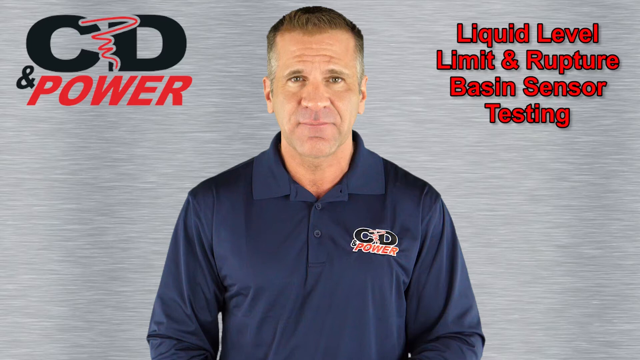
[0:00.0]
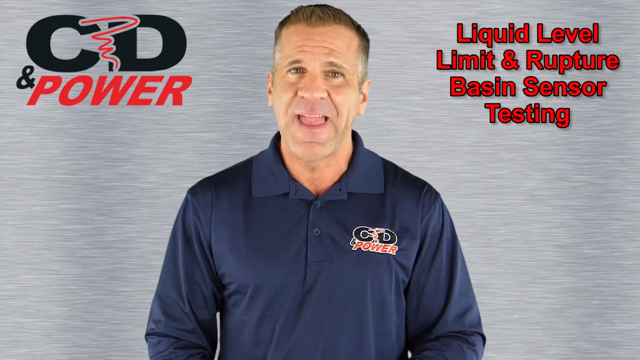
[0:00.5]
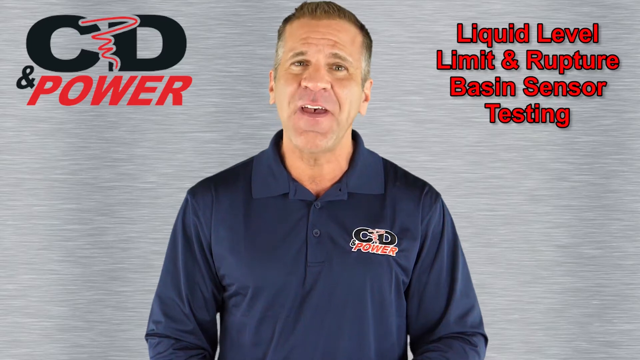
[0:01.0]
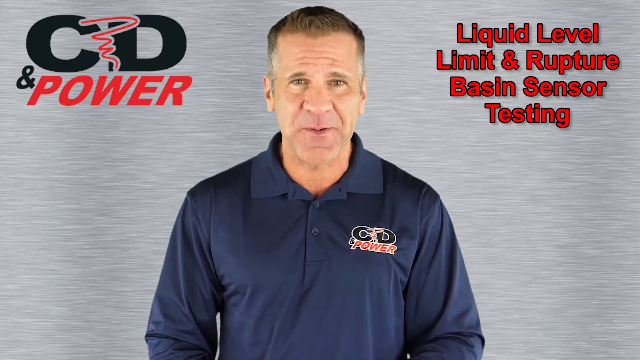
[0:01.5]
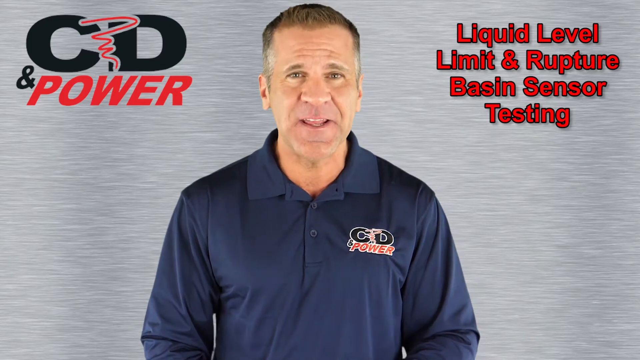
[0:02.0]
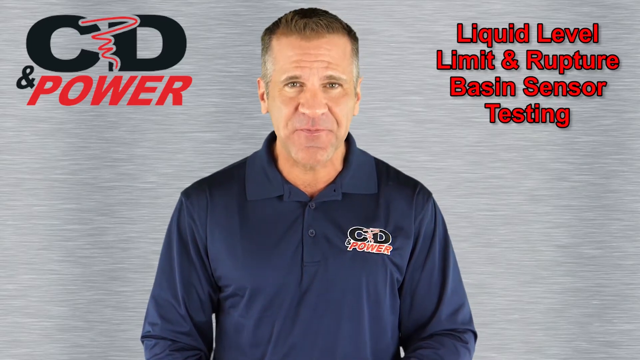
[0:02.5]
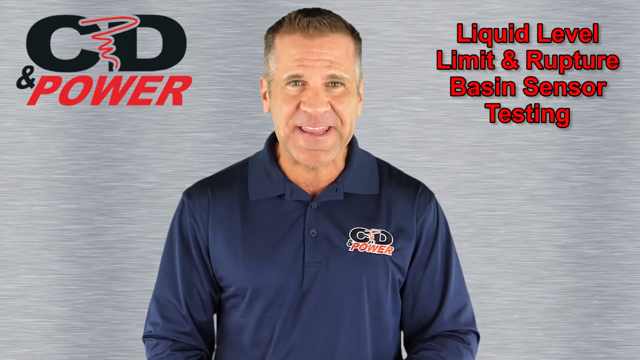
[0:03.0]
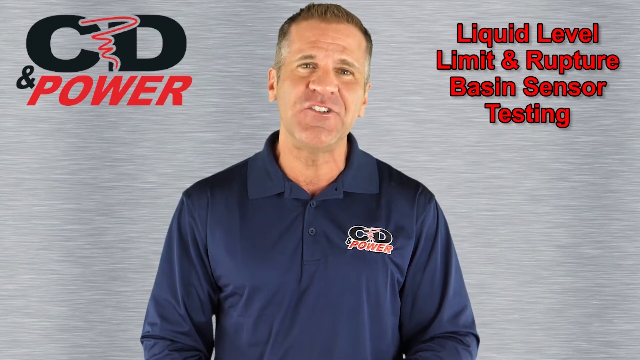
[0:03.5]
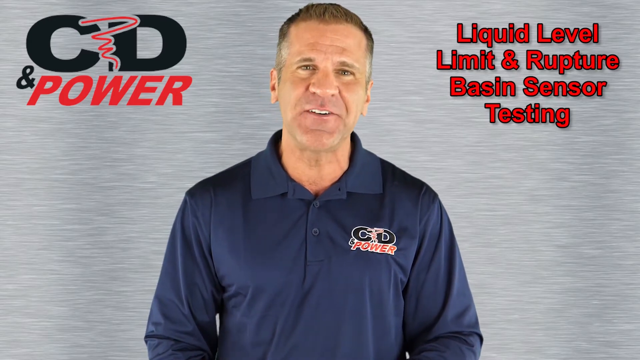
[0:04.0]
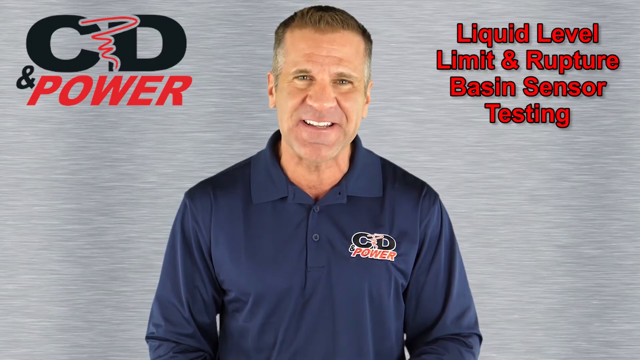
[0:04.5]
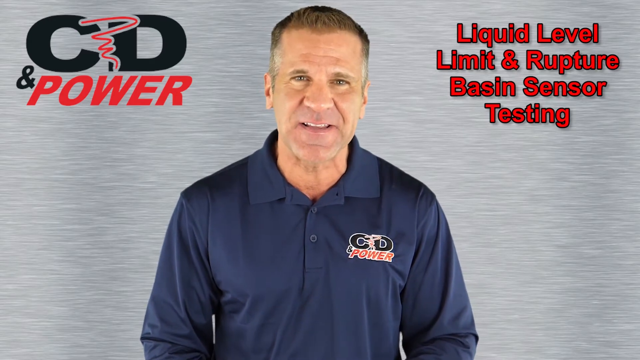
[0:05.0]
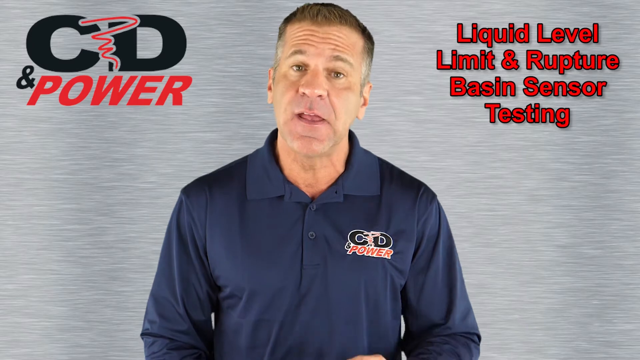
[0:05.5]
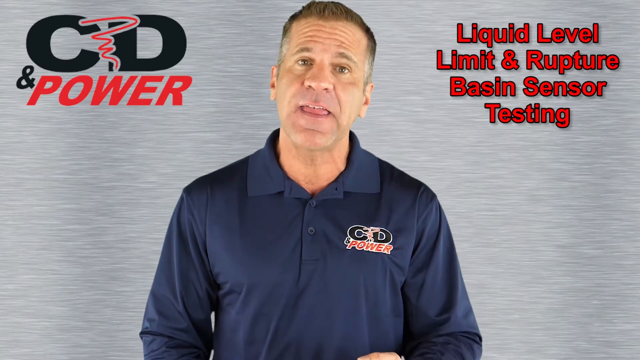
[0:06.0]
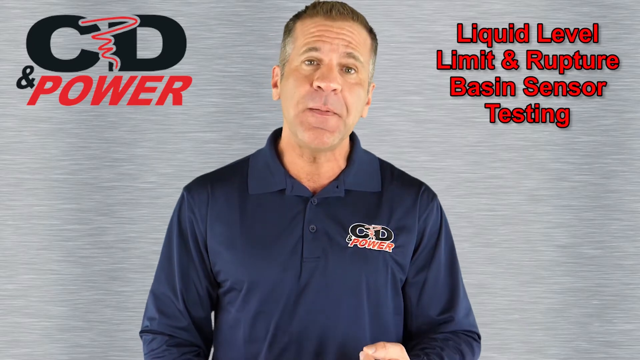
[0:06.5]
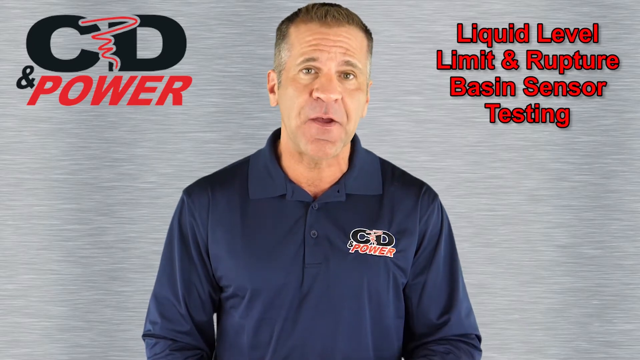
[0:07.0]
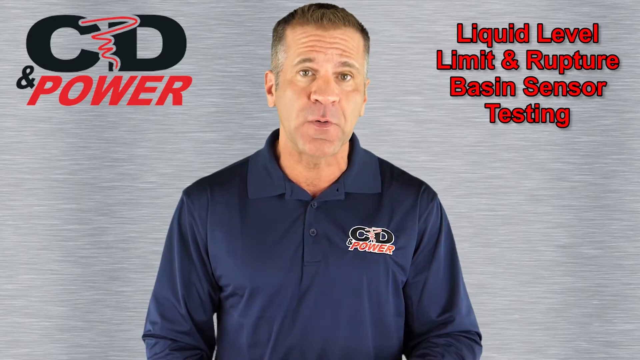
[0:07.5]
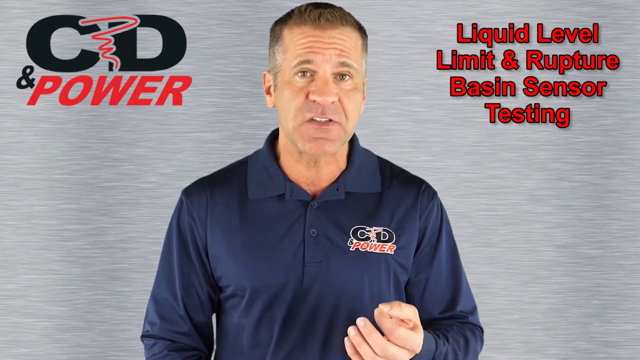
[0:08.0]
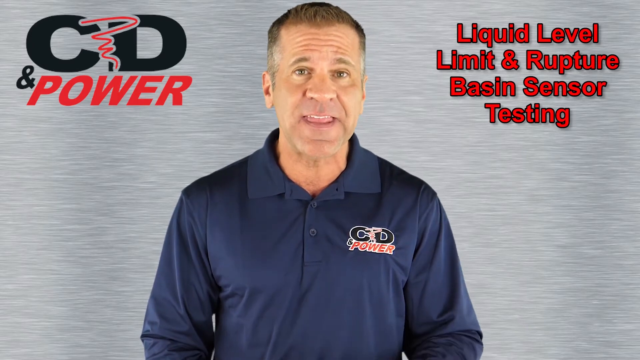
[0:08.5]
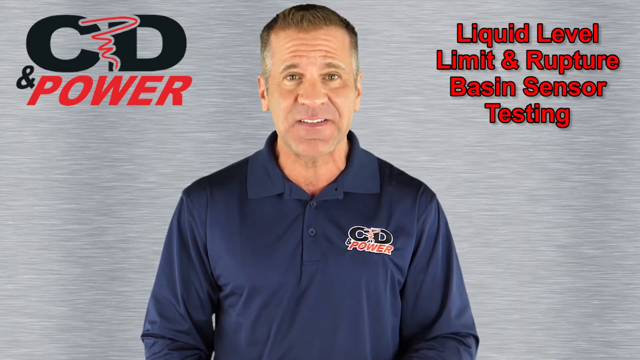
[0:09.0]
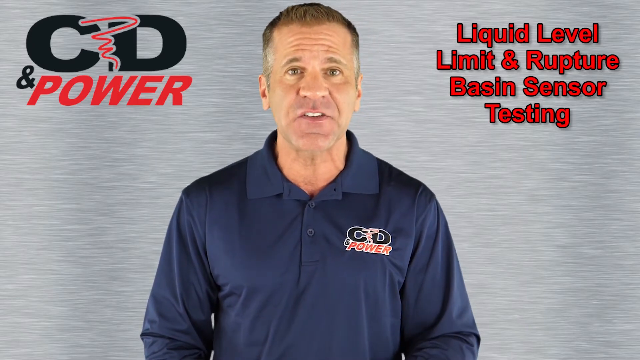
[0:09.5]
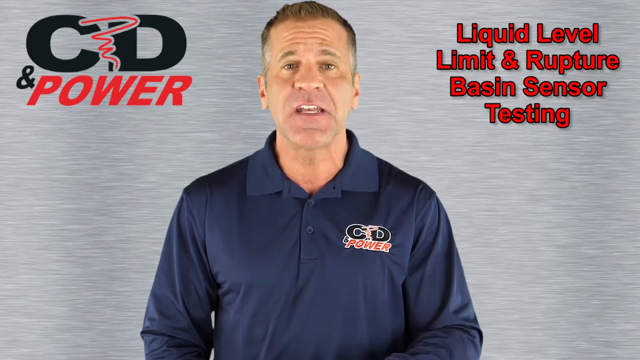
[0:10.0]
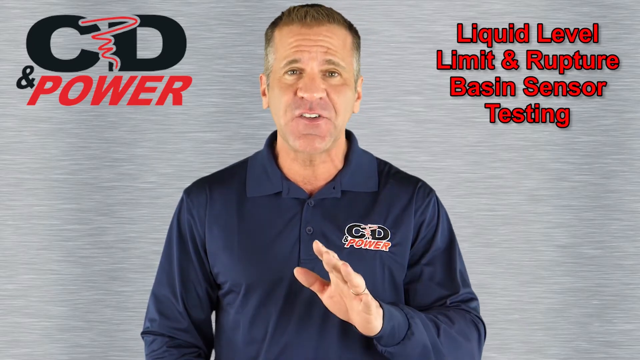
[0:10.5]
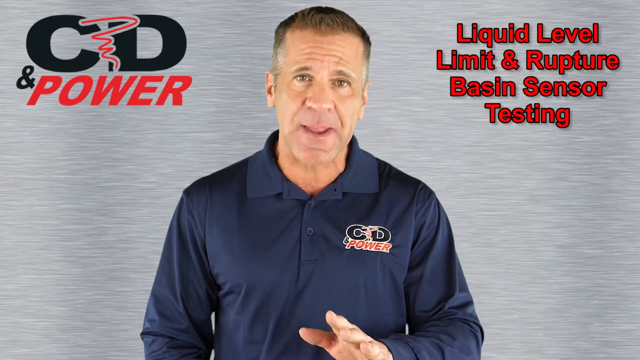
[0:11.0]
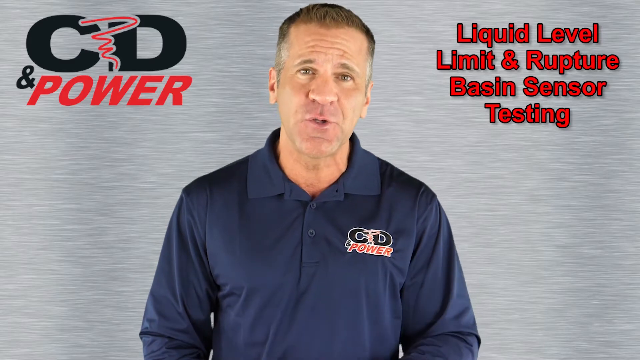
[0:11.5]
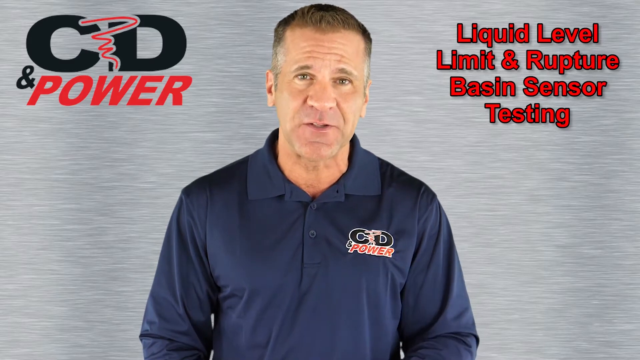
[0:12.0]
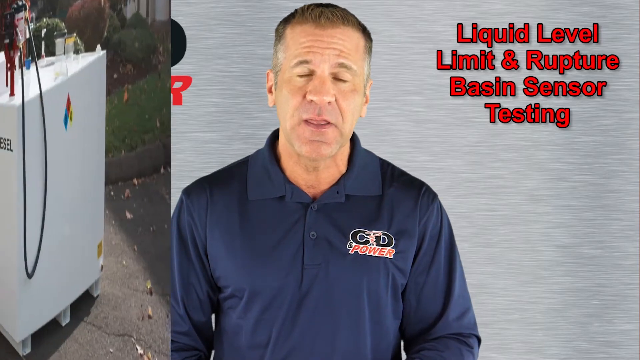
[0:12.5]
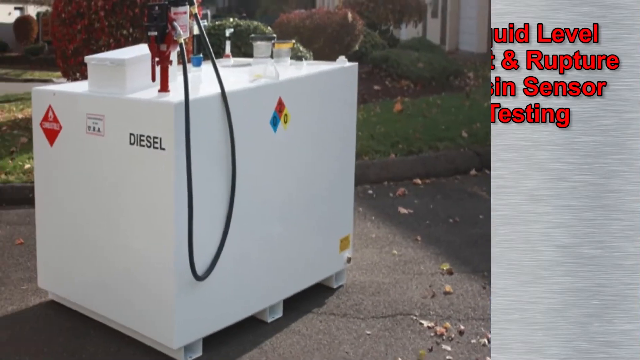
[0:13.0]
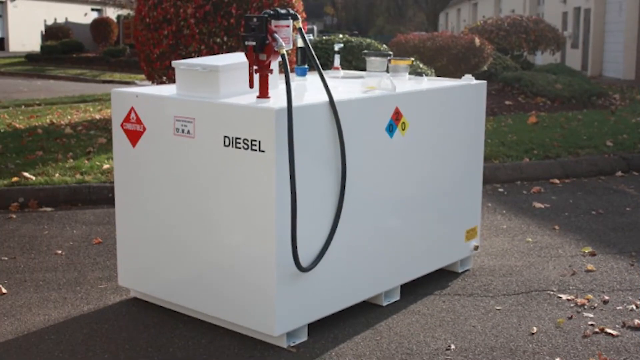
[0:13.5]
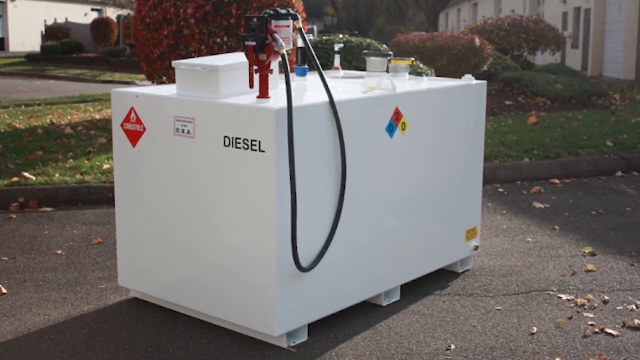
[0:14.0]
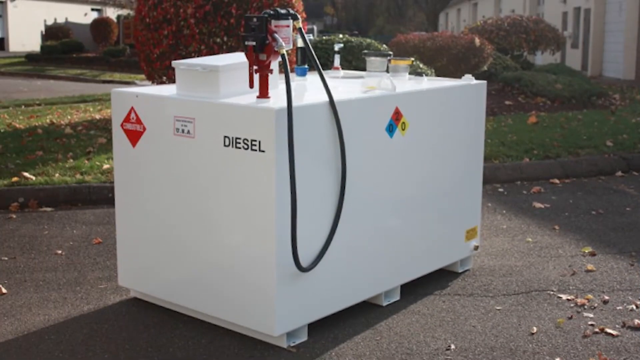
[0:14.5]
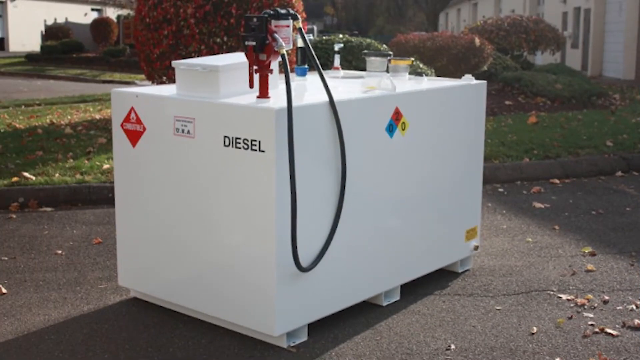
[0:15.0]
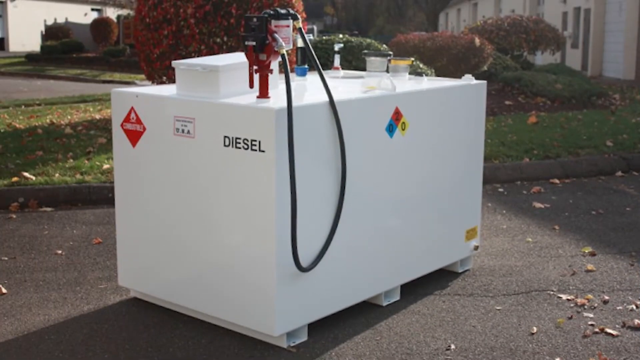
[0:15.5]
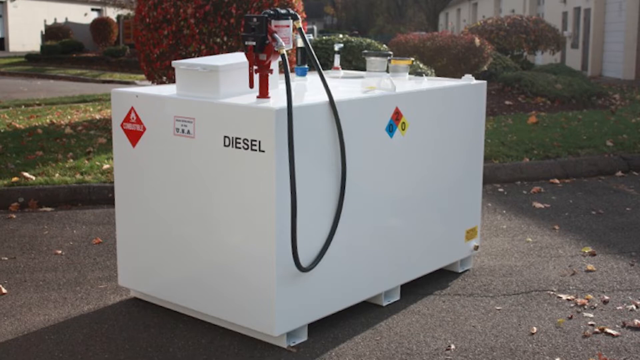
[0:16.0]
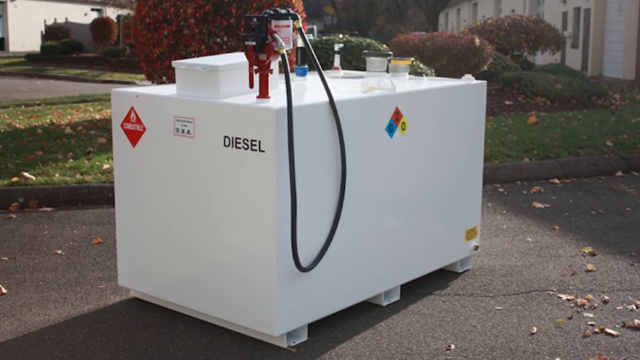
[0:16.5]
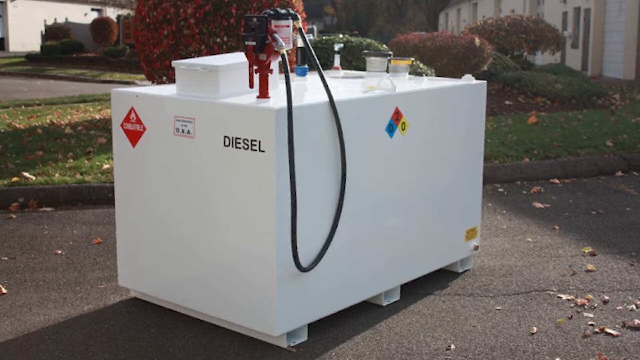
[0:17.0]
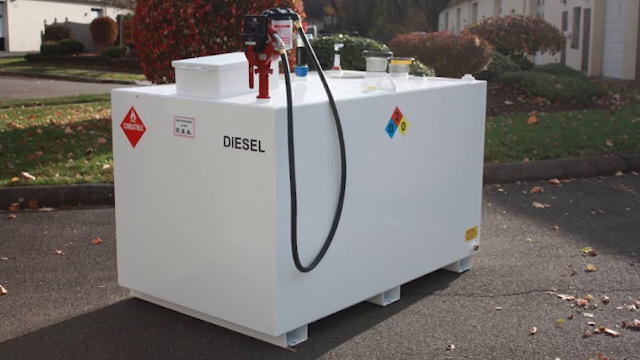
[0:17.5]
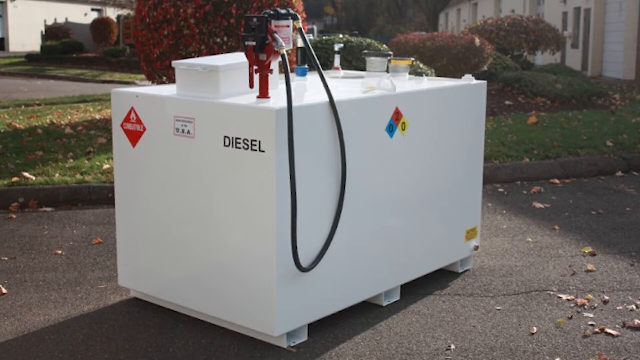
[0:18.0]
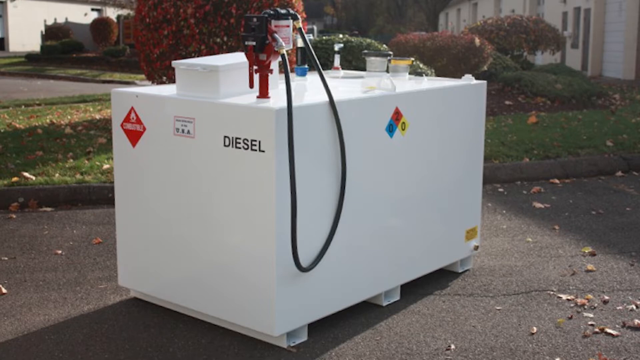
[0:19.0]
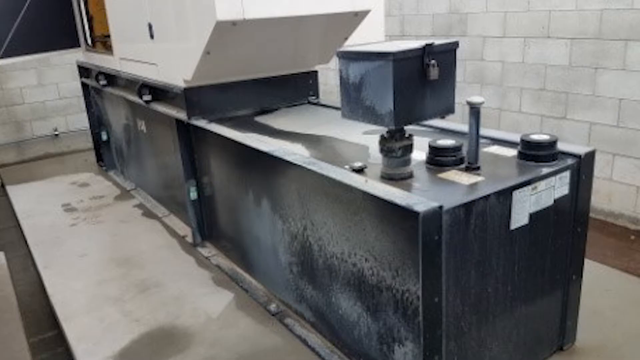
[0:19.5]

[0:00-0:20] A man stands in the middle of the frame, talking throughout; there are no subtitles. A logo, apparently his company's, appears at the top left, and the same symbol is on the vest he wears, on his chest. Red text at the top right reads "liquid level limit and rupture basin sensor testing". Afterwards a picture appears of what seems to be the instrument used for the testing: a giant white box, like a cube, with "diesel" on its left side.